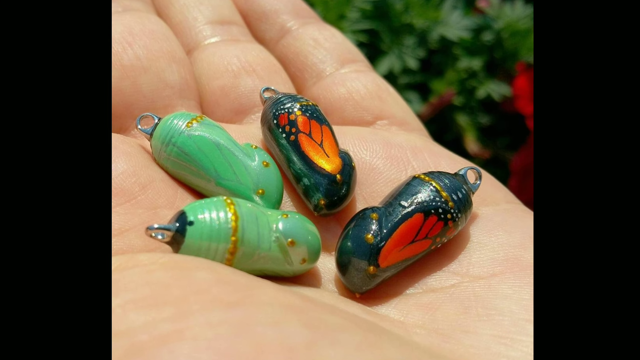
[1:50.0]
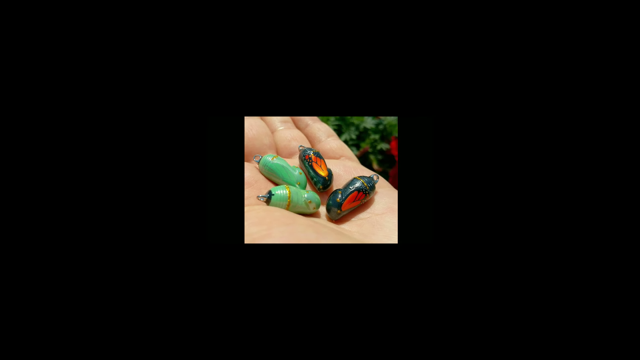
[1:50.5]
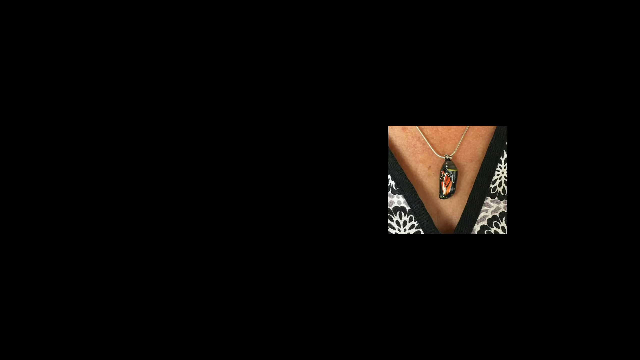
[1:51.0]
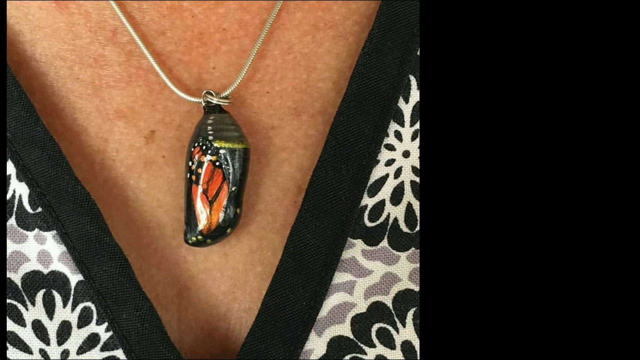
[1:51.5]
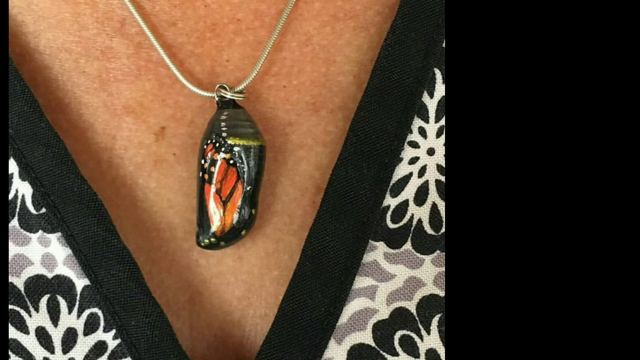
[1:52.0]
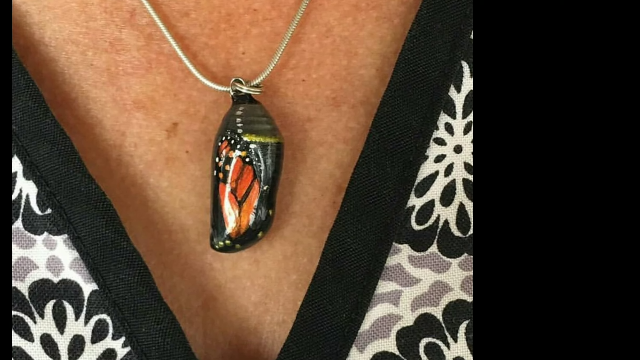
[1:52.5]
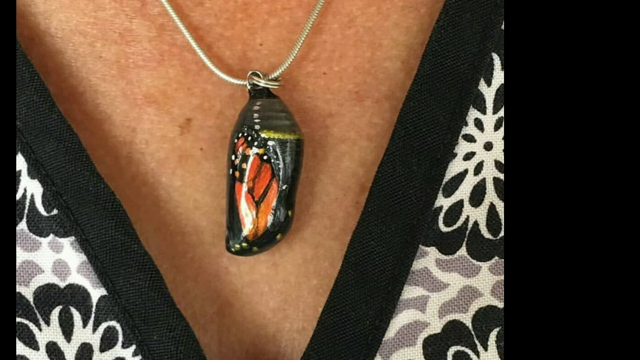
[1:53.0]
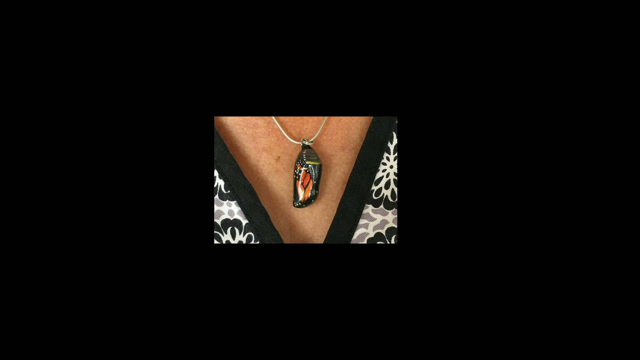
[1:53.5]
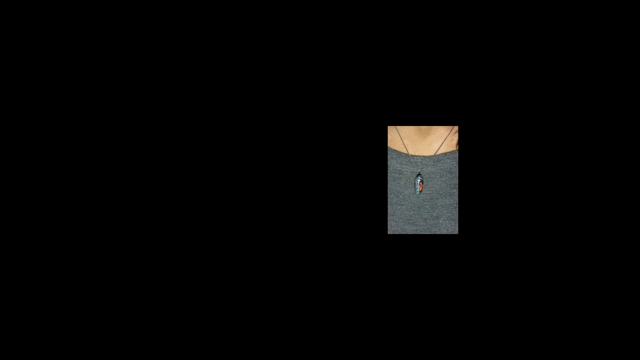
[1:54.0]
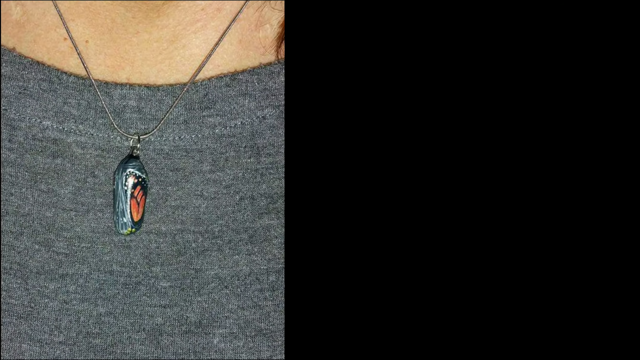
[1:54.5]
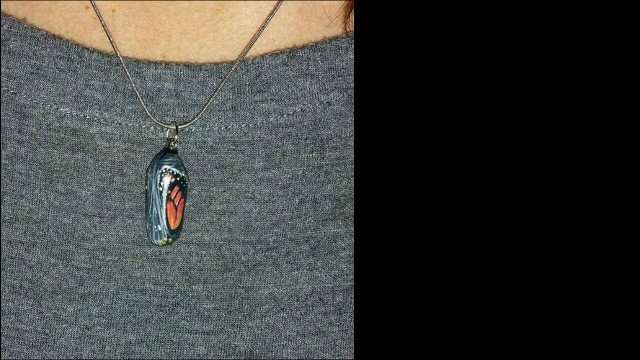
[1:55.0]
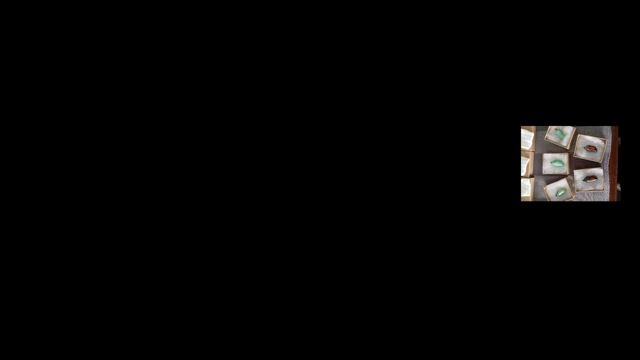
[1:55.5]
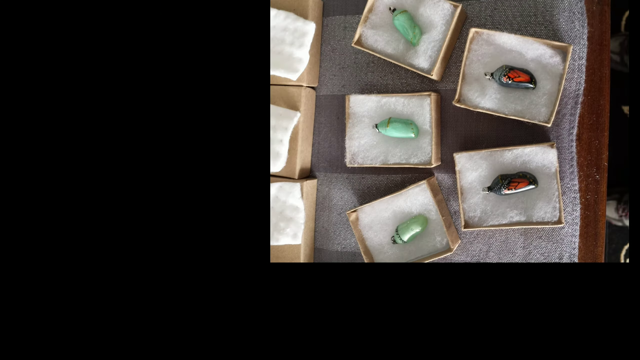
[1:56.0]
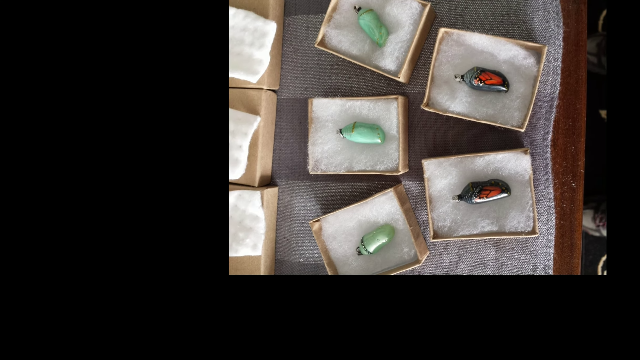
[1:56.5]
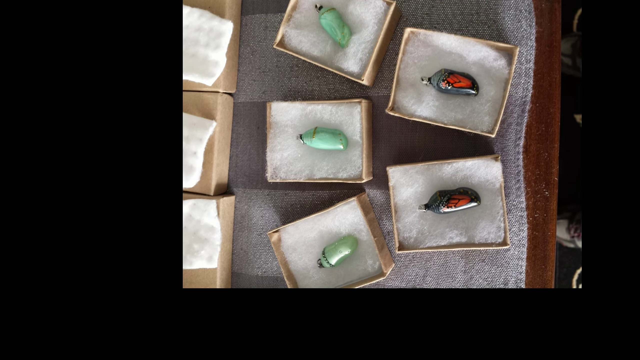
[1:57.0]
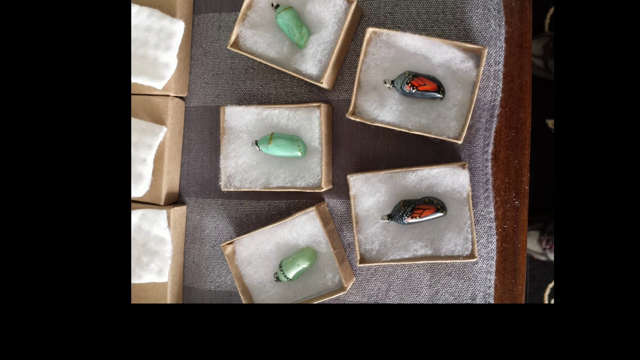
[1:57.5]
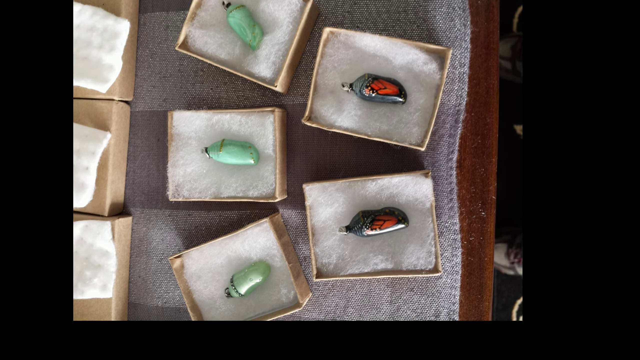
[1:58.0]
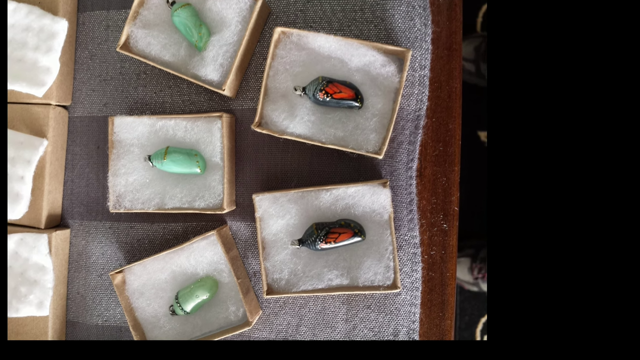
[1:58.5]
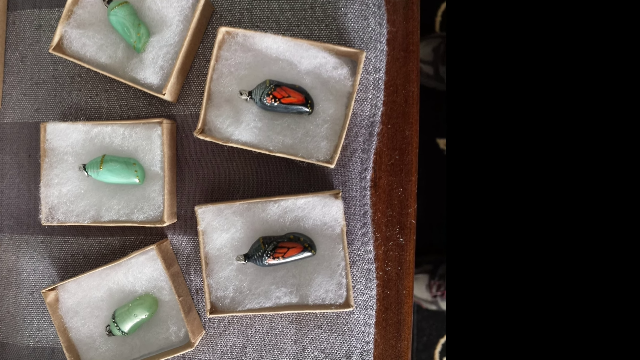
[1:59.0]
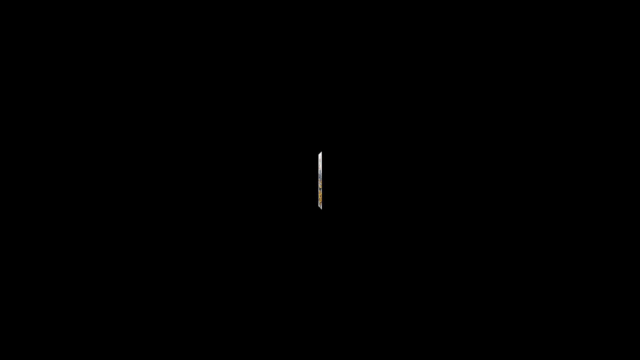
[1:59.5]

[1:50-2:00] An image shows someone holding small cocoons that look like pendants, two green and two multicolored; it is a zoomed-in image of the palm of a hand holding the four cocoons. The image is quickly pushed out to the left by another image showing what looks like a woman's neck with a cocoon on a necklace. The cocoon looks black, with a design on the outside that looks like a monarch butterfly wing, and the camera zooms in on it. That image is bumped out by the next one, which appears to show the décolletage of another woman wearing a similar necklace, this time with what appears to be a blue cocoon bearing another wing that looks like a monarch butterfly wing. That image is bumped to the left and a new image appears, showing five cocoon necklace charms in five individual boxes; the two on the left side are a jade color and the two on the right side are black with monarch wings on the side.